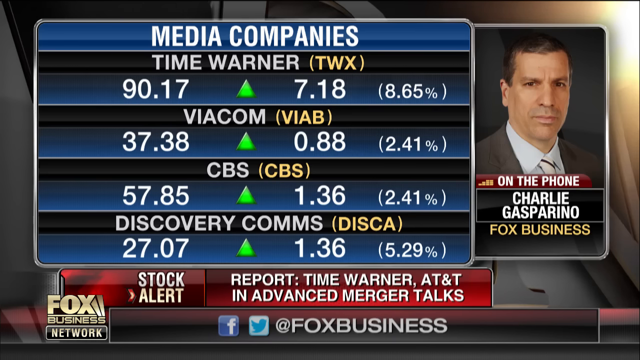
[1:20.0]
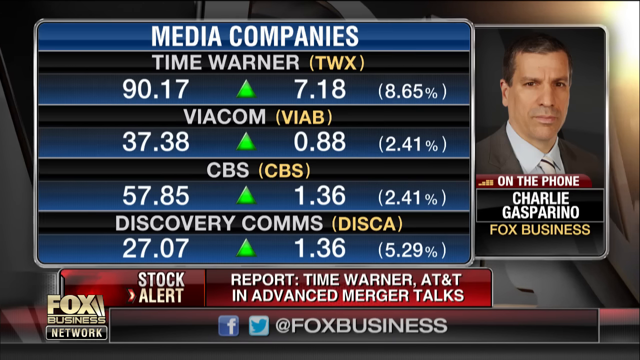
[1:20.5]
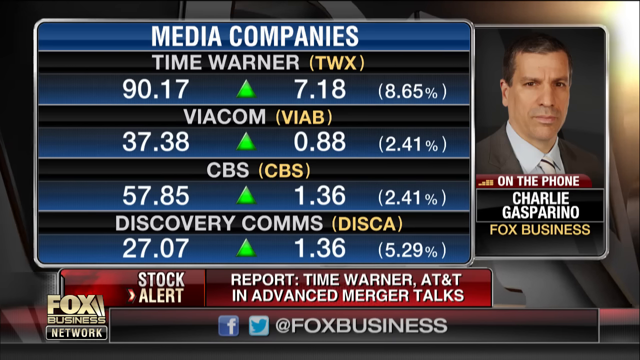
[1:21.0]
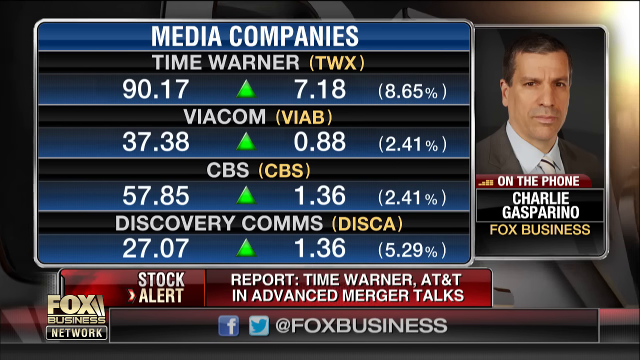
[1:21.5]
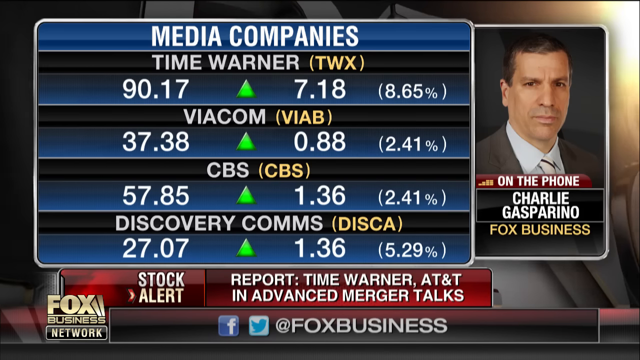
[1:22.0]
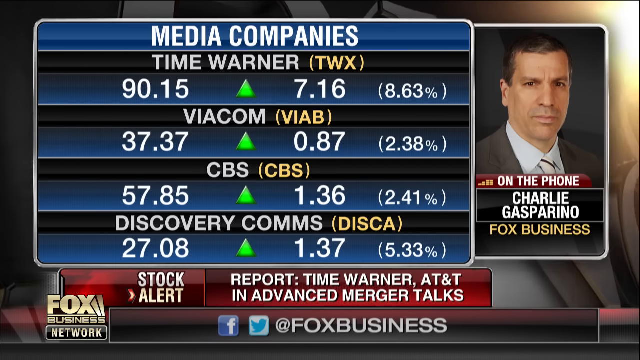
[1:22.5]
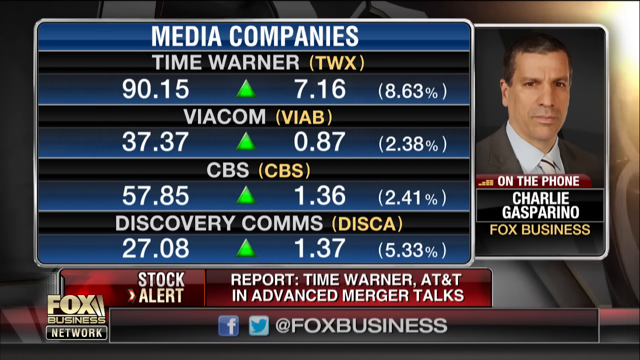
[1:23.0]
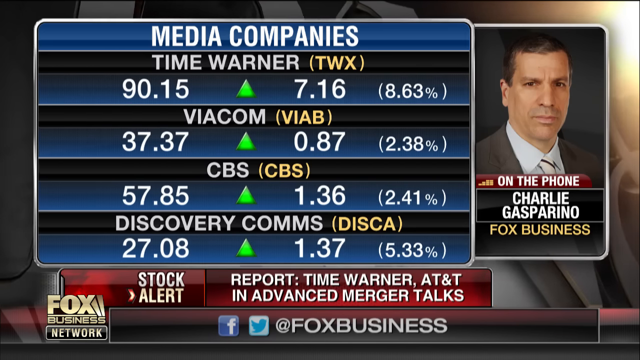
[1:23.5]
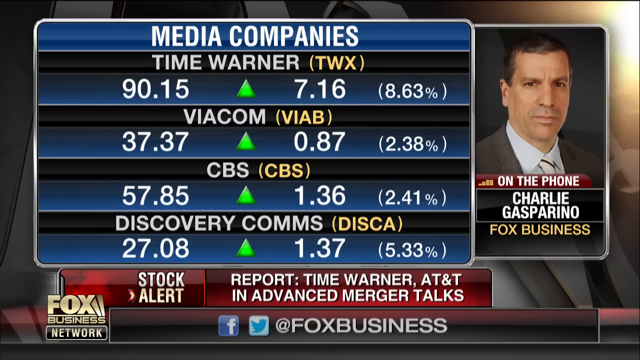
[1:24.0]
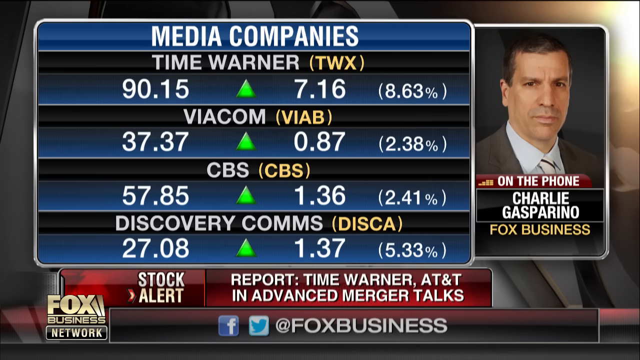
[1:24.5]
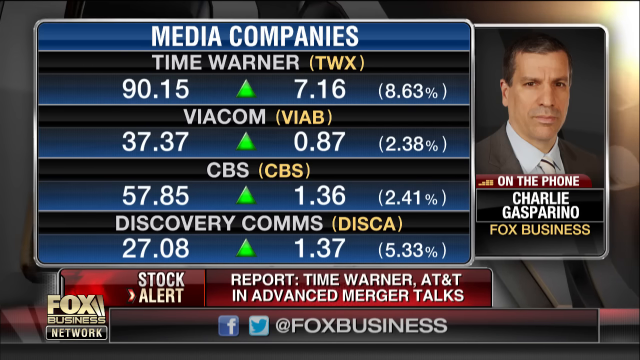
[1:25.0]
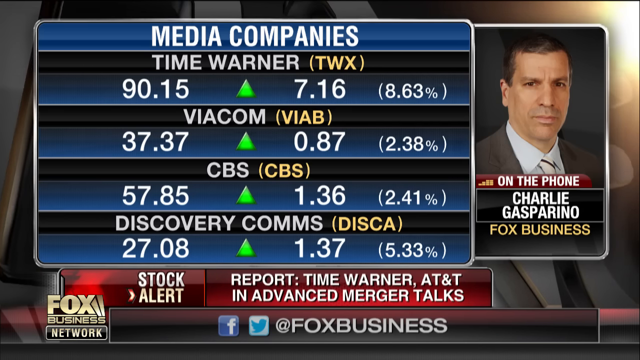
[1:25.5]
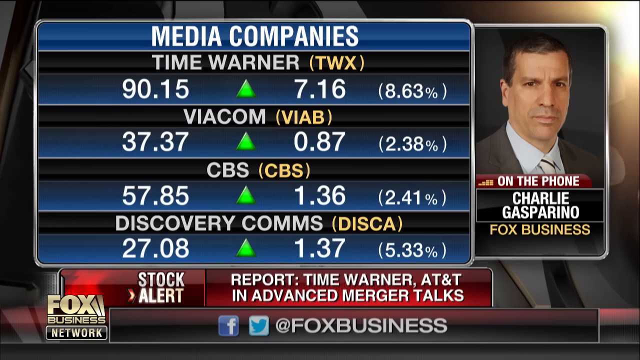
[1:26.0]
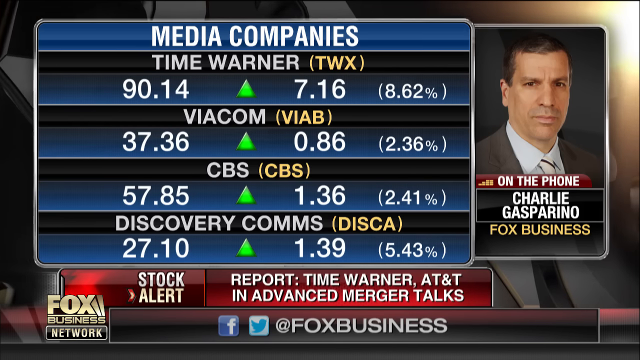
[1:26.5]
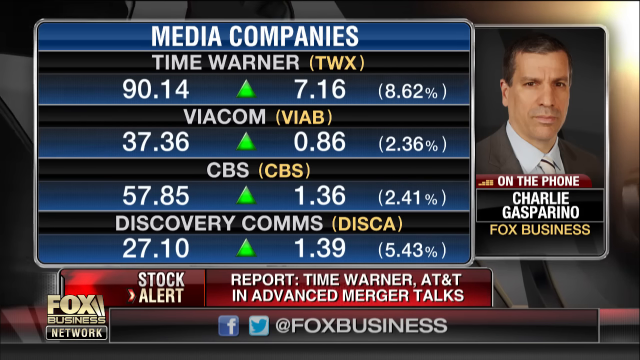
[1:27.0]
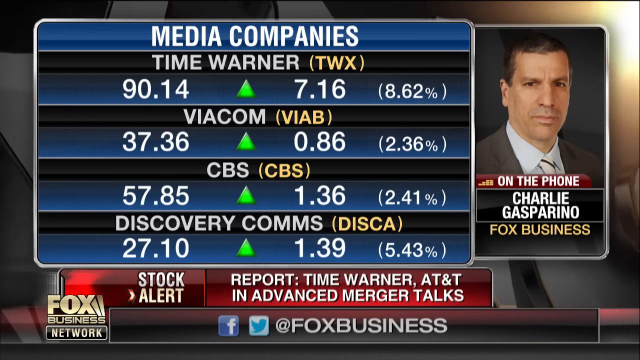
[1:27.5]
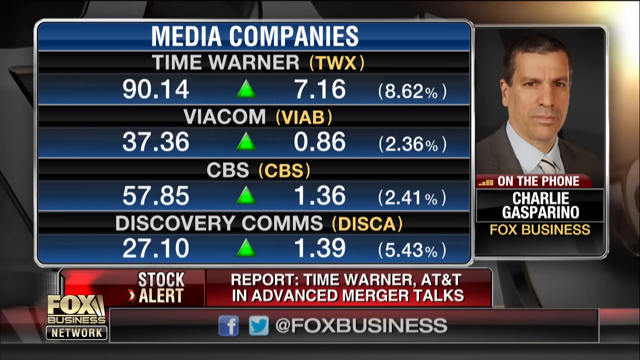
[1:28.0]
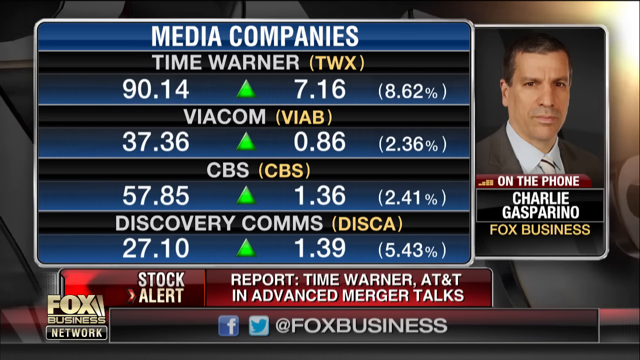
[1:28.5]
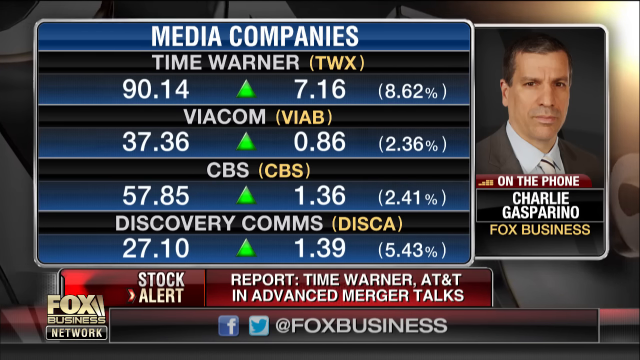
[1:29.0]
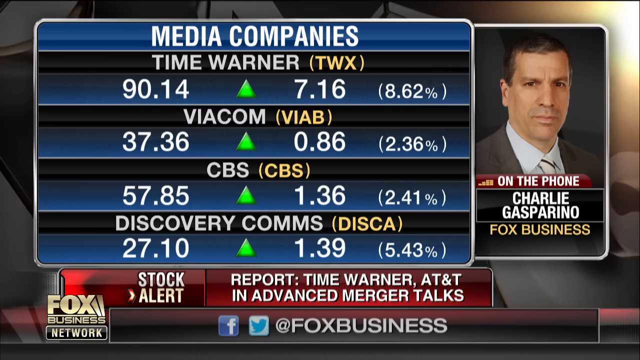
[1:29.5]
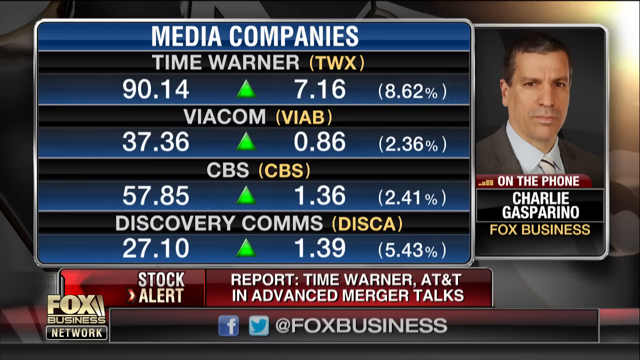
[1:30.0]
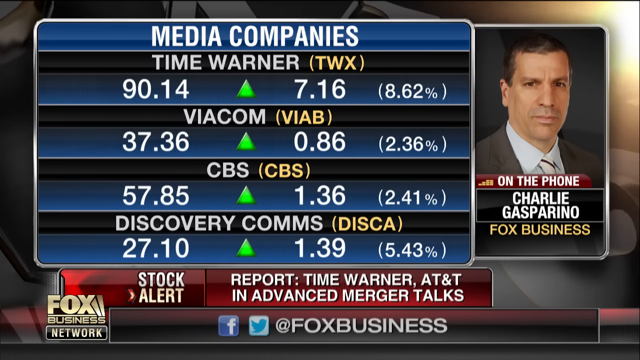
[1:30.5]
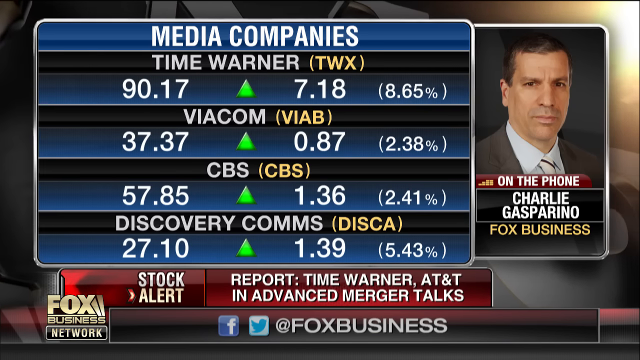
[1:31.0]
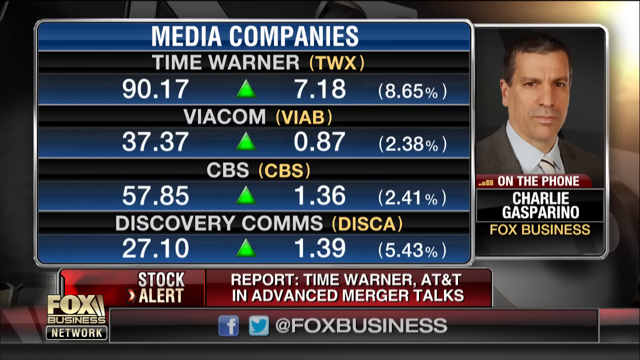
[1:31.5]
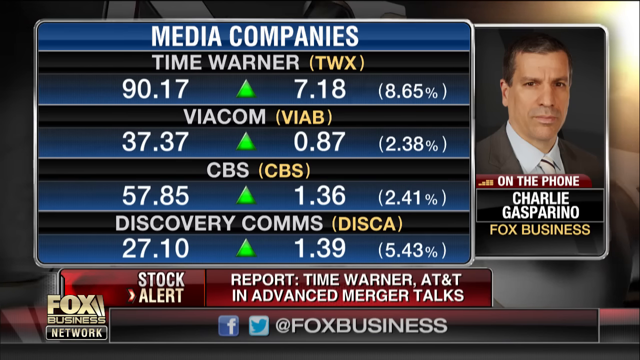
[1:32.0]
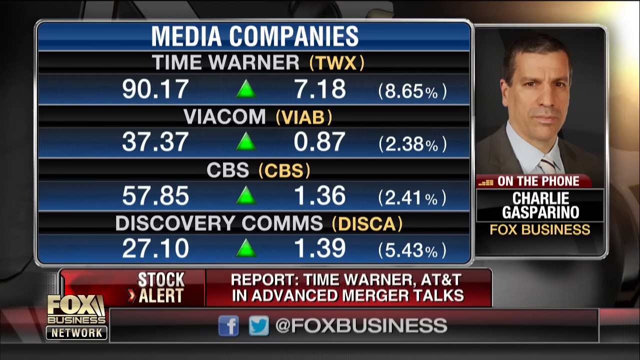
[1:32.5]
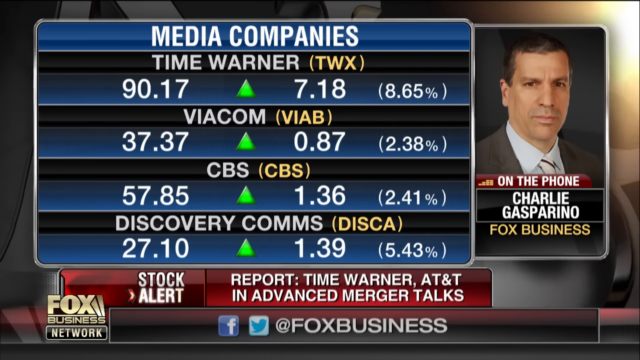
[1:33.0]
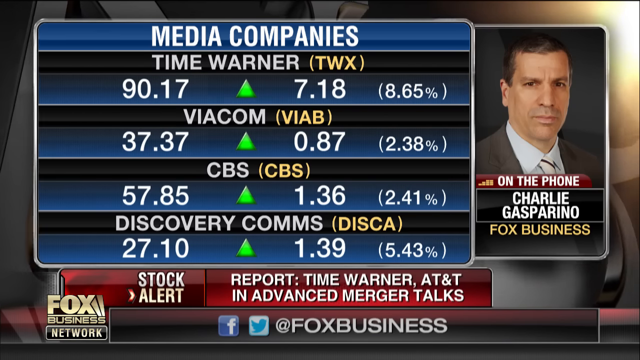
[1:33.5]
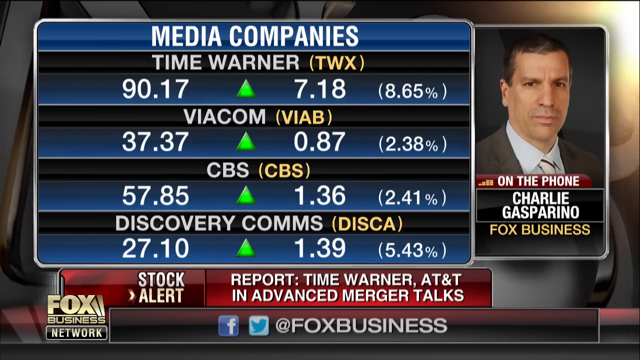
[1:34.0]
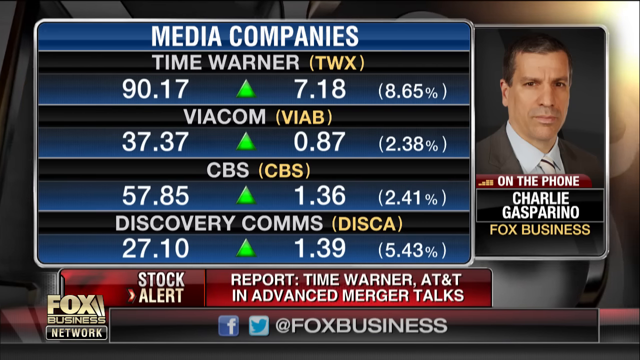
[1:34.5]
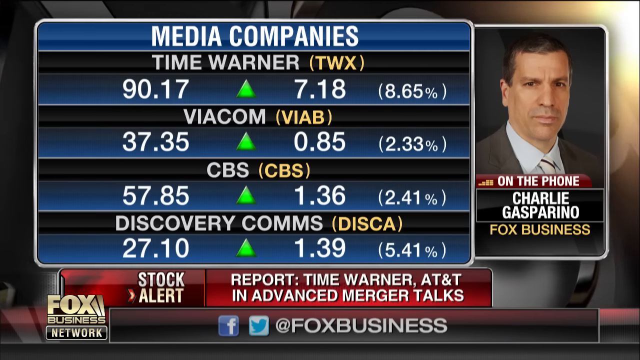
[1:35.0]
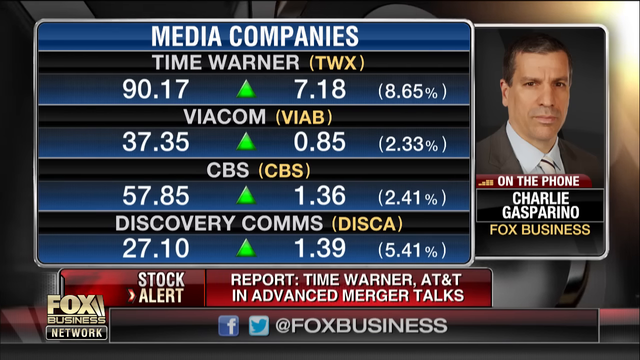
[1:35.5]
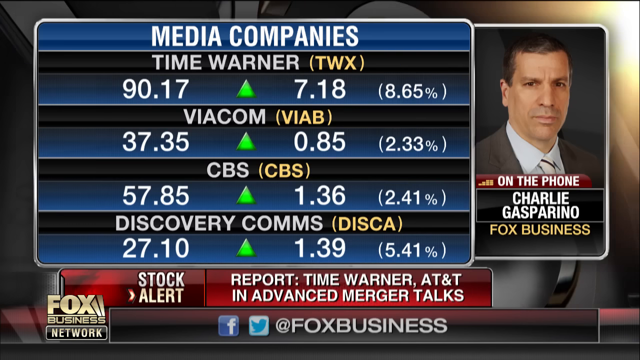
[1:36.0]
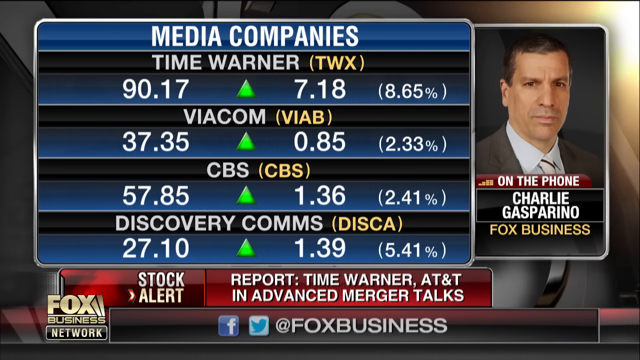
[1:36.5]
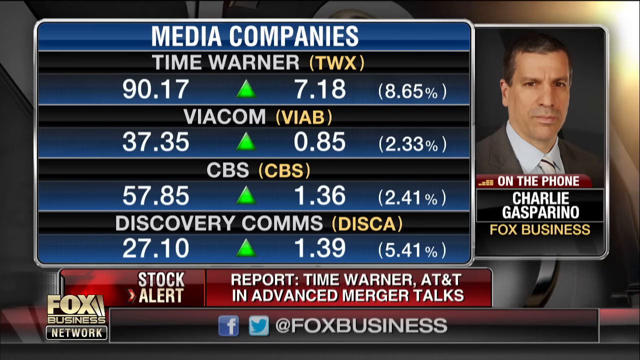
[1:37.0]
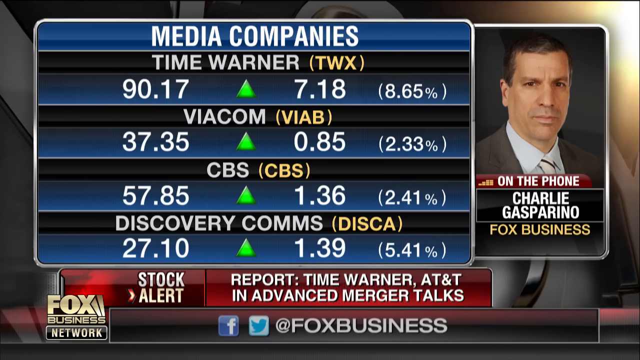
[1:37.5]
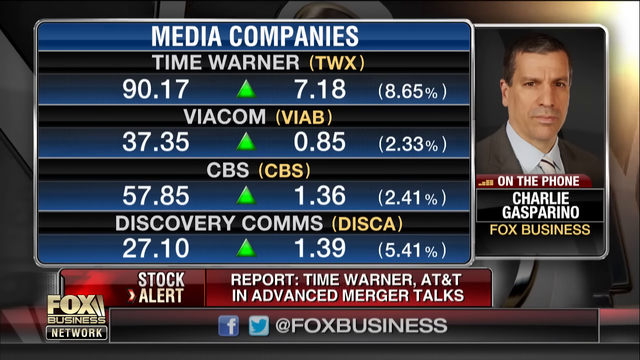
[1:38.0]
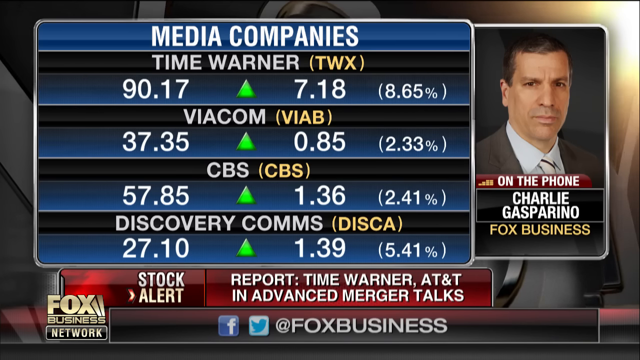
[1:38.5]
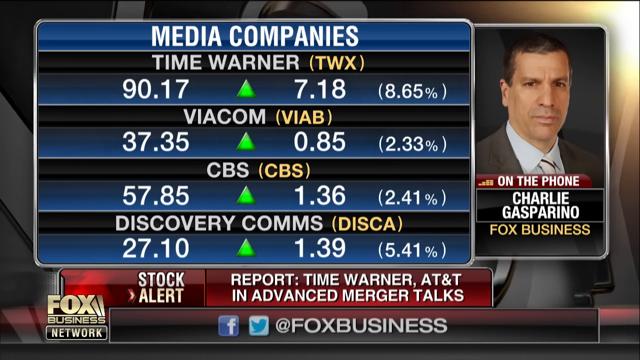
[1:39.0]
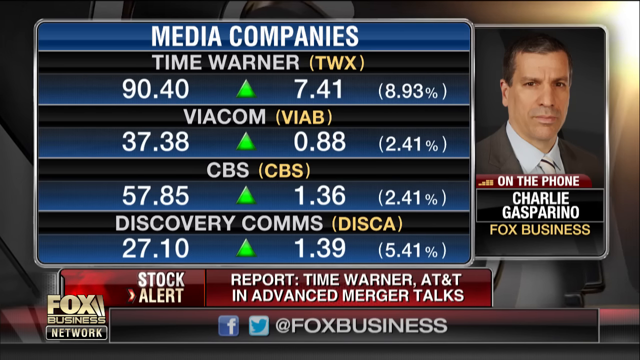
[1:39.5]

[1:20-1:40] The stock window fluctuates, showing Time Warner 90.17, up 7.18, 8.65%; Viacom 37.38, up 0.88, 2.41%; CBS 57.85, up 1.36, 2.41%; Discovery Comms 27.07, up 1.36, 5.29%. The prices then change to Time Warner 90.15, up 7.16, 8.63%; Viacom 37.37, up 0.87, 2.38%; CBS 57.85, up 1.36, 2.41%; Discovery Comms 27.08, up 1.37, 5.33%. The words "stock alert" on the news ticker glisten, and glisten again. The background letters continue to revolve and pass to the left, and "STOCK ALERT" on the upper ticker glistens once more. The numbers change to Time Warner 90.14, up 7.16, 8.62%; Viacom 37.36, up 0.86, 2.36%; CBS 57.85, up 1.36, 2.41%; Discovery Comms 27.10, up 1.39, 5.43%. Viacom then changes to 37.37, 0.87, 2.38%, and "stock alert" glistens. Viacom changes to 37.35, up 0.85, 2.33%. Then Time Warner changes to 90.40, up 7.41, 8.93%, and Viacom to 37.38, up 0.88, 2.41%.